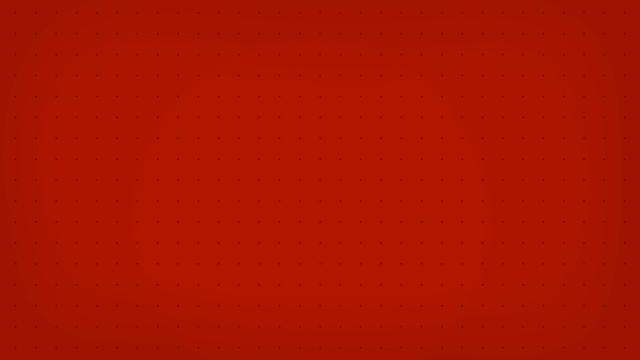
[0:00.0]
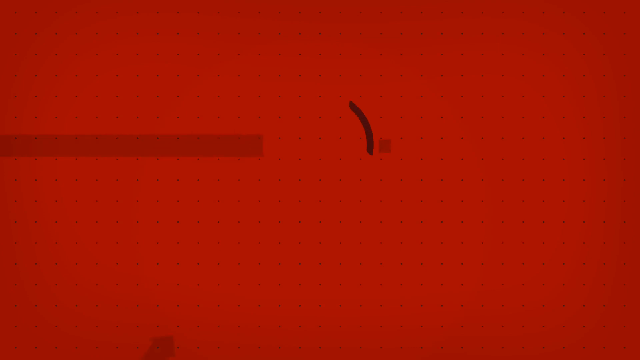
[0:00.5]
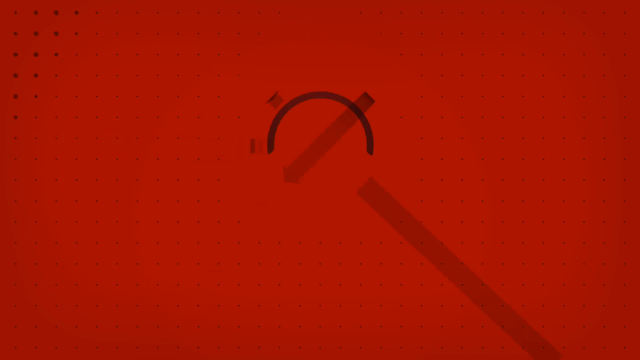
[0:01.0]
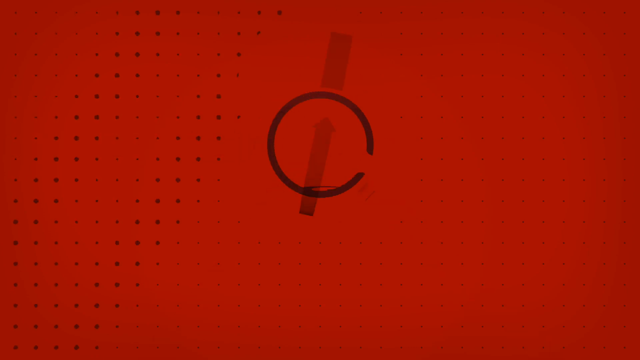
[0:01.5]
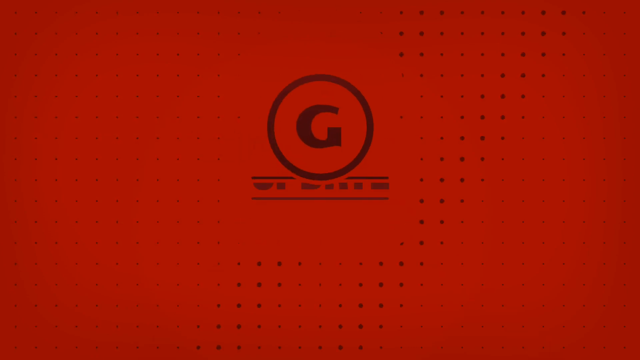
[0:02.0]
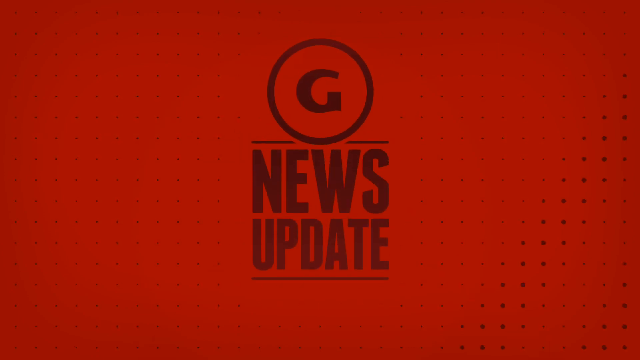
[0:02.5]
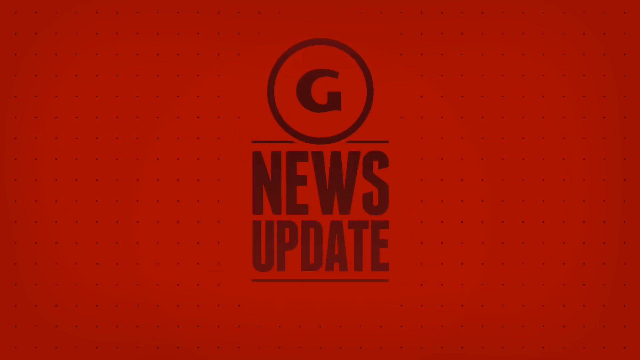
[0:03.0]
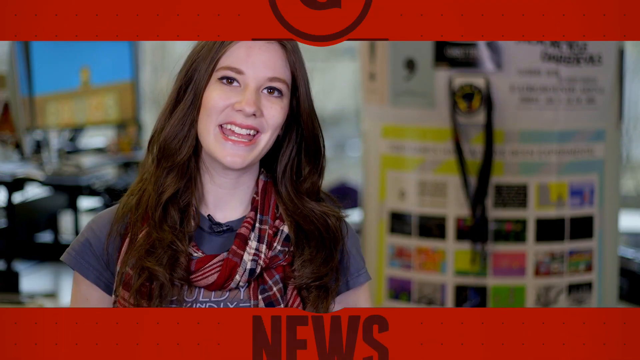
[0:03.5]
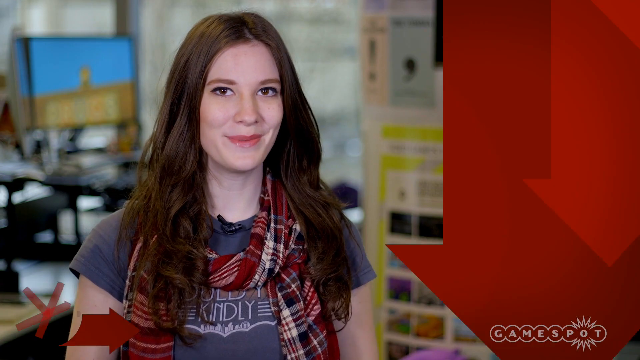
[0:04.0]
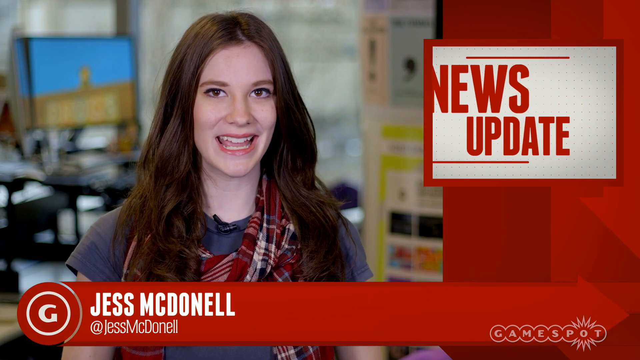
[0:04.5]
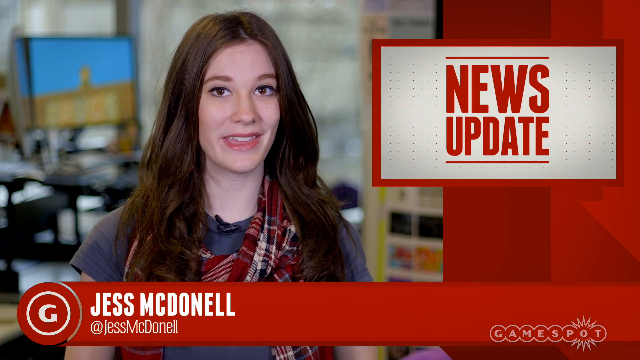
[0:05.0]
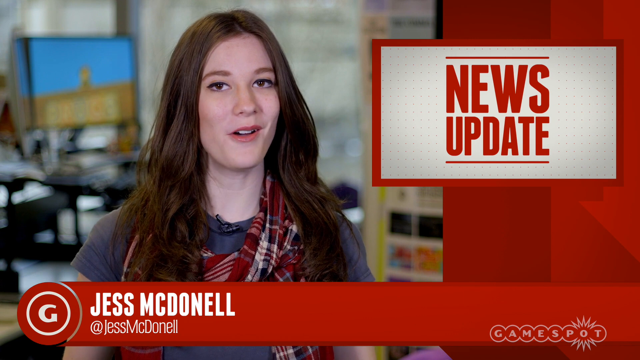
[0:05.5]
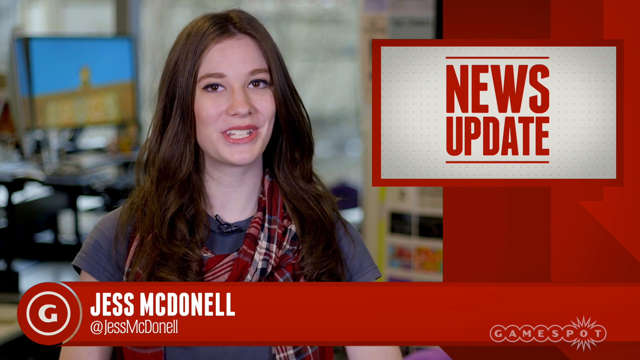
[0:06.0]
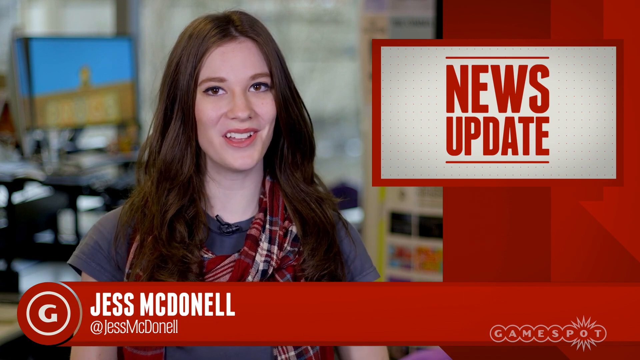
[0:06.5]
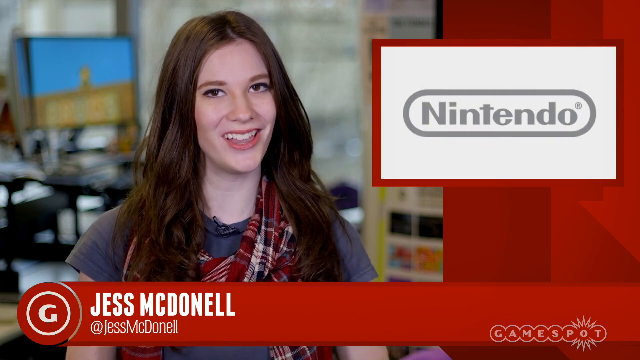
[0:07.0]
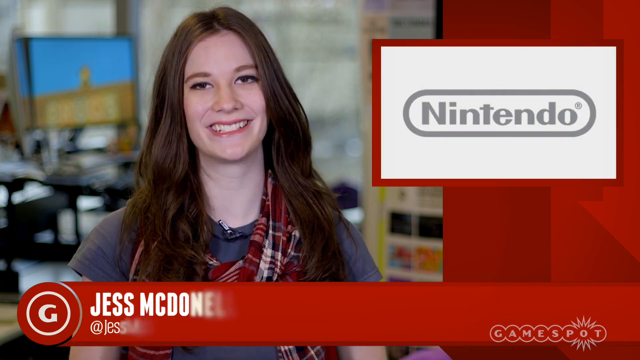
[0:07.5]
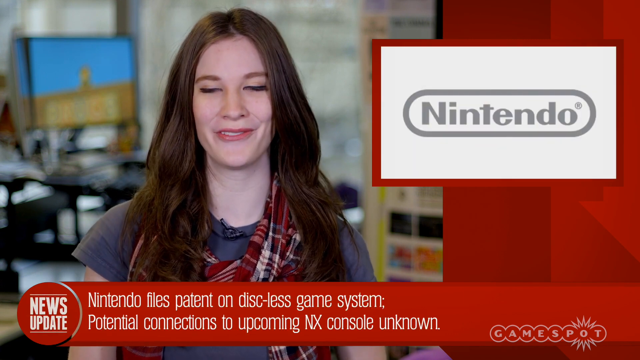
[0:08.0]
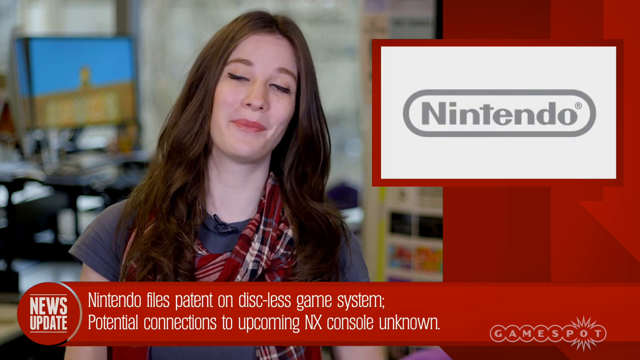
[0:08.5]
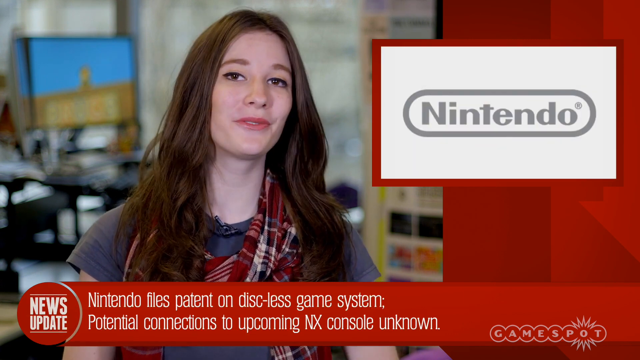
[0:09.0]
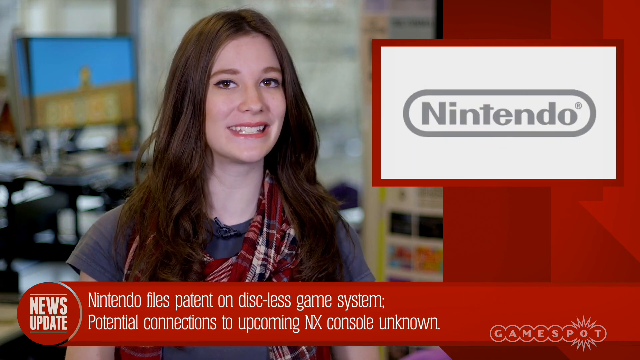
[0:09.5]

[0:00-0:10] Over a red screen, dark lines fly in and form a circle with the letter G in the middle, and the words "News Update" slide down below it. Dots line the border, and it is shaded below. The screen then splits in half and slides to the top and the bottom. Red arrows point down on the right side. A young woman with long brown hair smiles as she addresses the camera; her name is Jess McDowell. On the right side is a white block that says "EWS Update". She is a reporter and grins as she talks. Behind her are desks or a table with people working, and she moves her head to the left. She is very expressive, and as she talks her cheeks are big because she is smiling. The word "Nintendo" then appears in the window on the right side, and when she stops talking her mouth is open wide, showing her teeth.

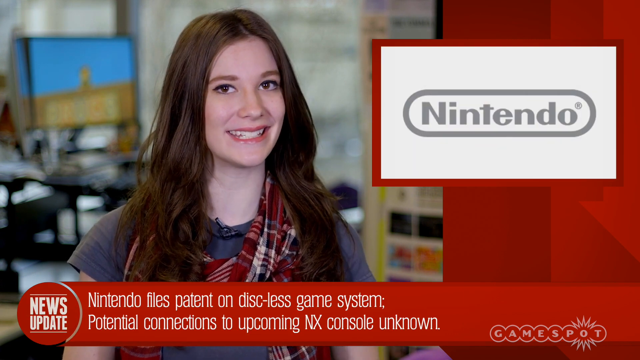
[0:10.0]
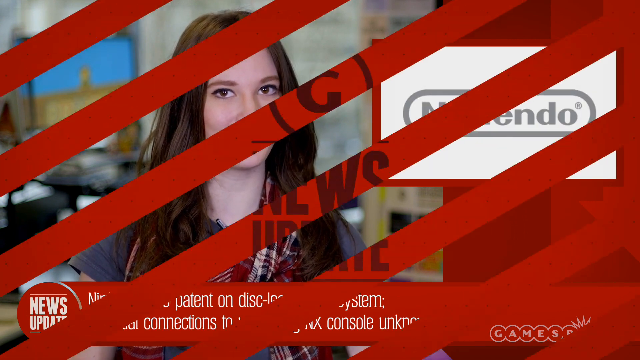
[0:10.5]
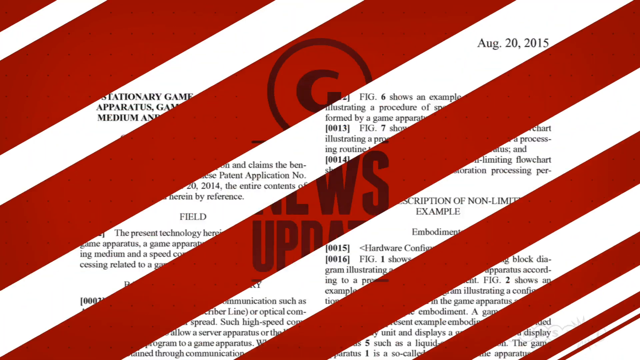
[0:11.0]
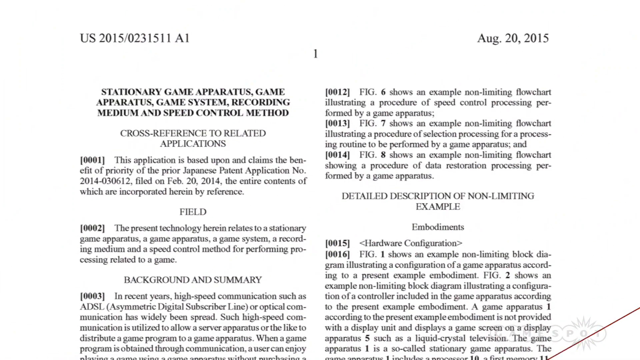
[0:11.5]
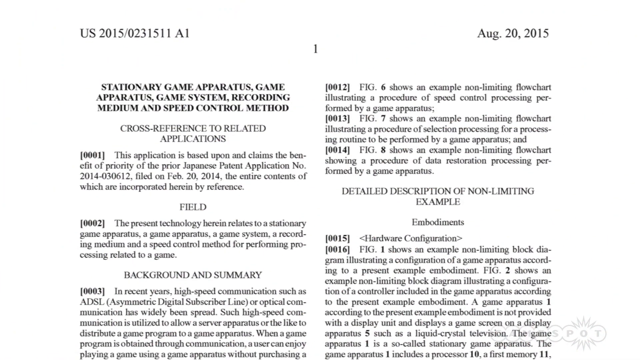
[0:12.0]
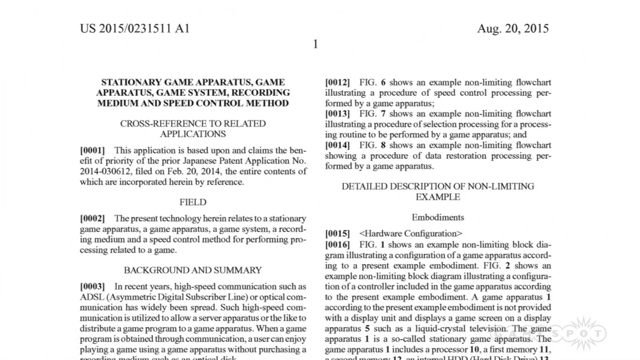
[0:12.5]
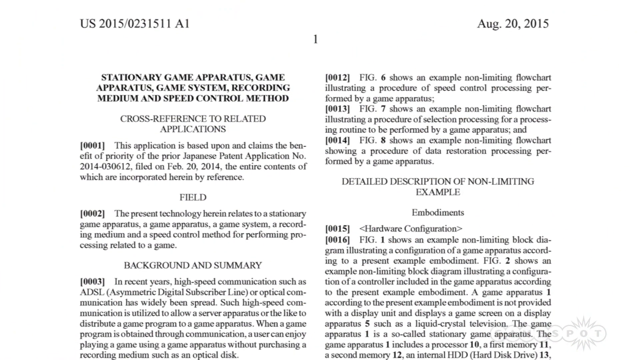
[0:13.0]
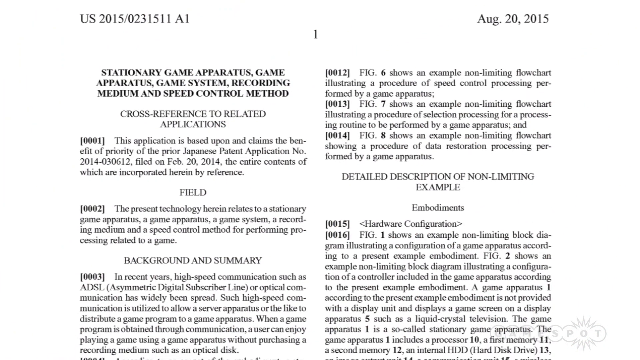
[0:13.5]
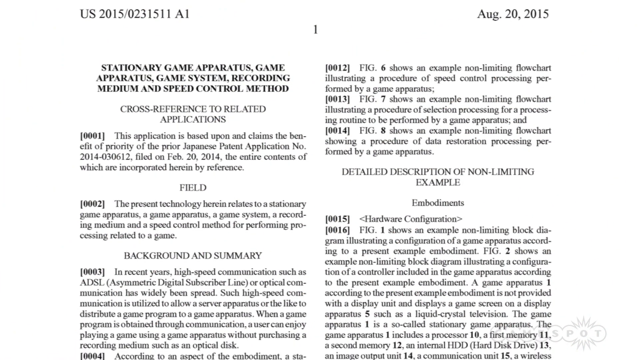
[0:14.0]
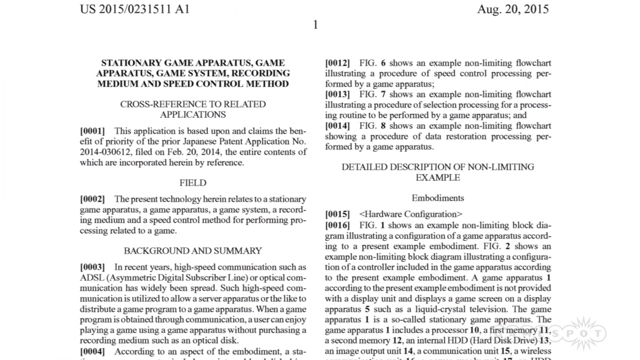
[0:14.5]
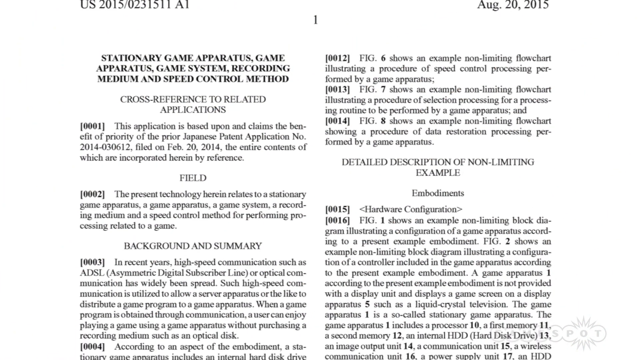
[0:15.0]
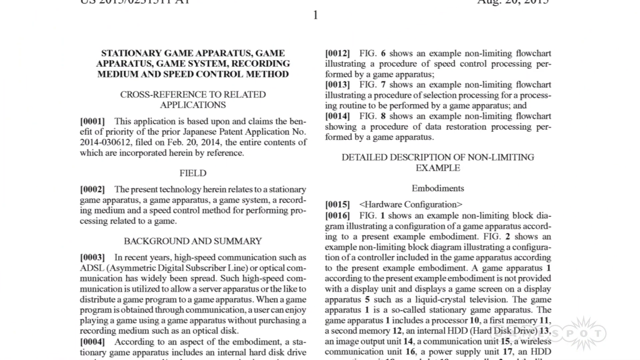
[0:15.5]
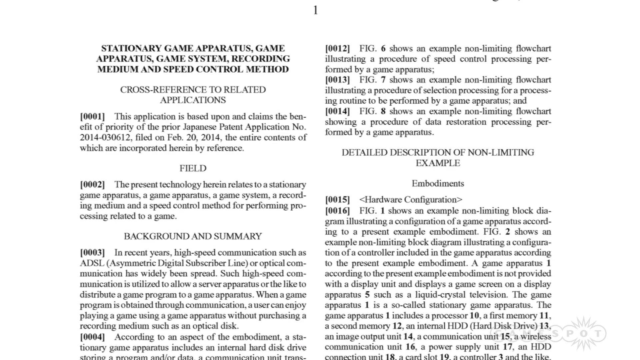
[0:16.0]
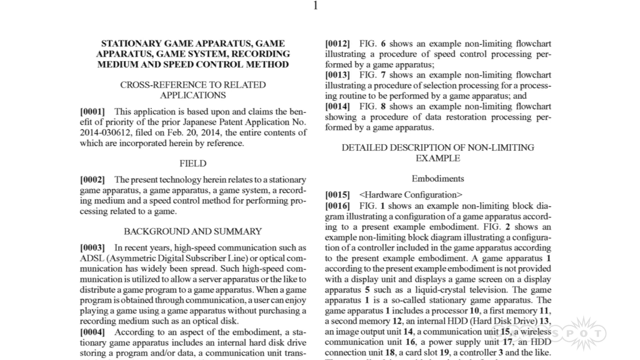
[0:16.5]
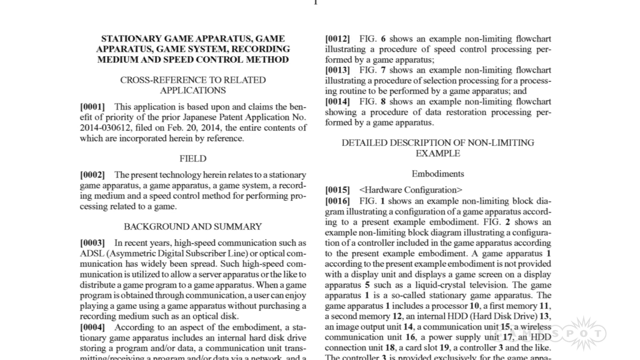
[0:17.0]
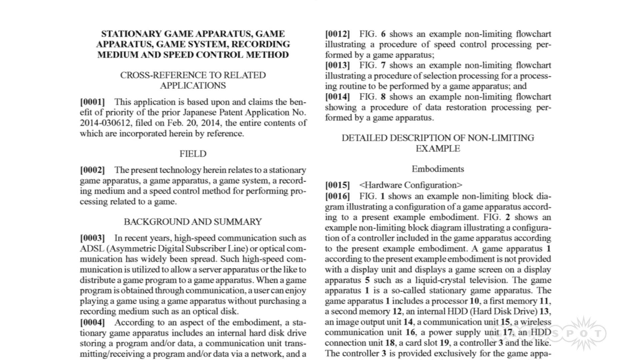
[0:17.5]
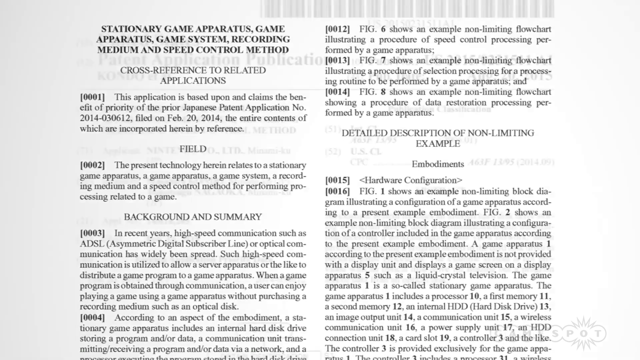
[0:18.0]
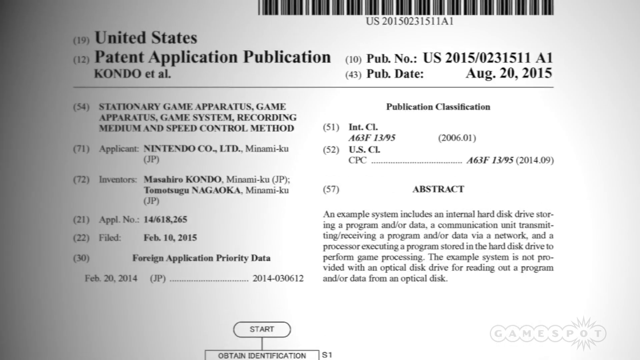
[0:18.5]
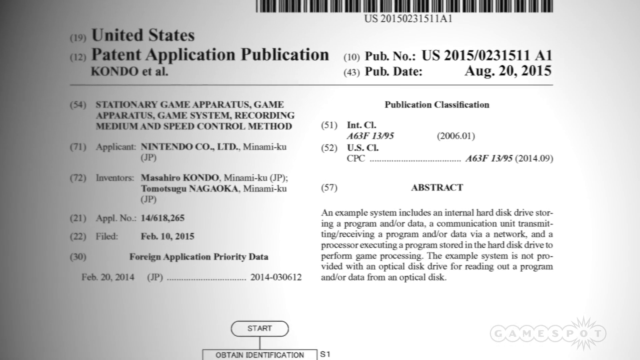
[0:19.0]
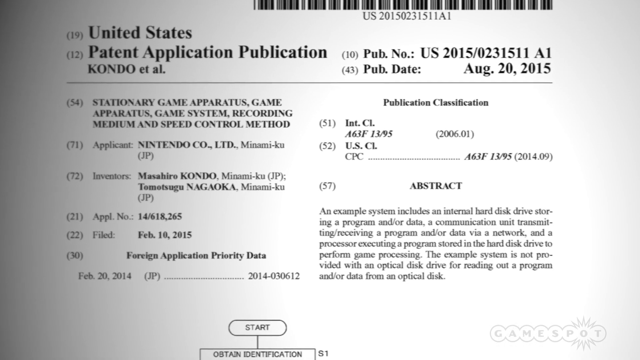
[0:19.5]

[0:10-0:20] The screen goes red, splits into horizontal or diagonal slices, and vanishes. The view then scrolls down a document, zooming down slowly; it looks like a patent application. It cuts to a different page dated August 20th, 2015. The news caption says a patent was filed on a disc-less game system and that connections to the upcoming NX console are unknown. The application was filed with the US Patent Office on February 10, 2025, and it lists the inventors, the application number and details of the patent.